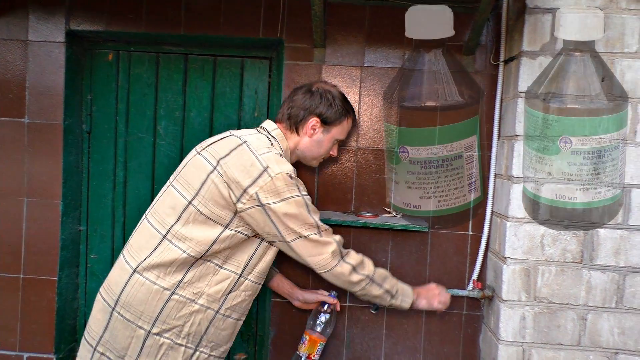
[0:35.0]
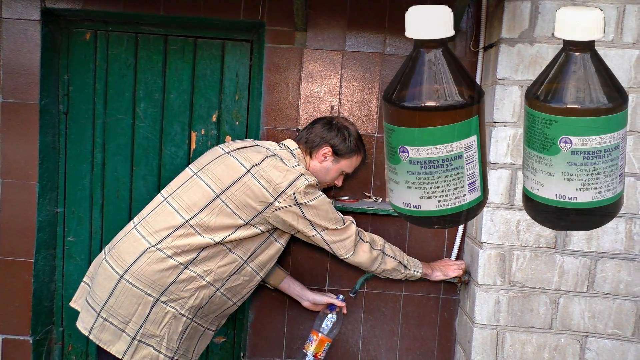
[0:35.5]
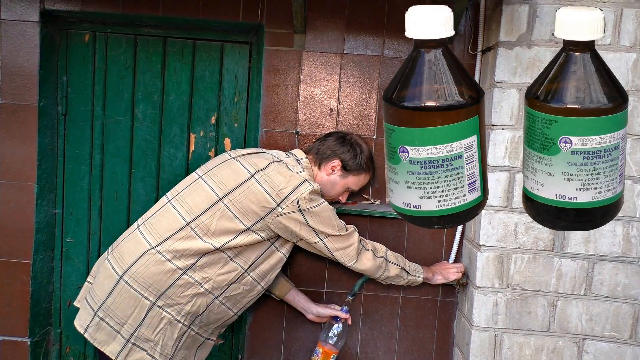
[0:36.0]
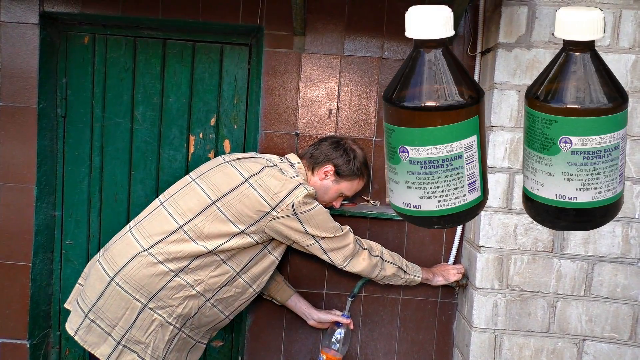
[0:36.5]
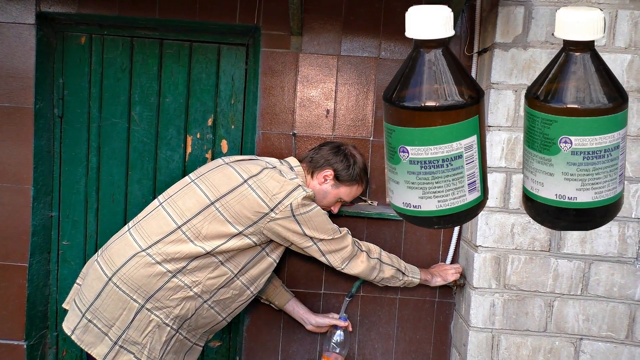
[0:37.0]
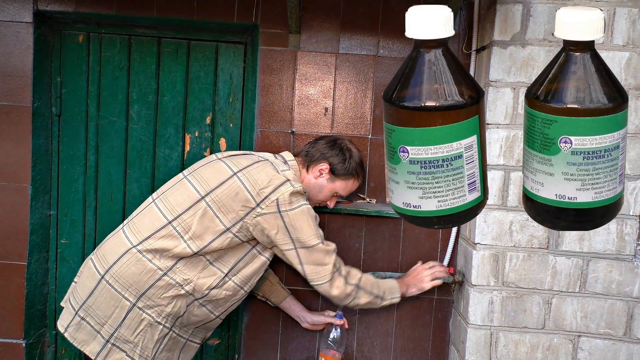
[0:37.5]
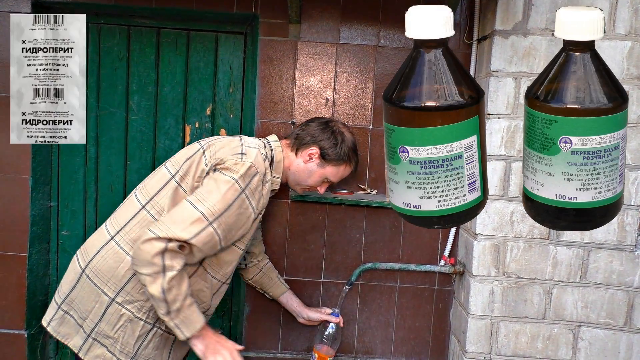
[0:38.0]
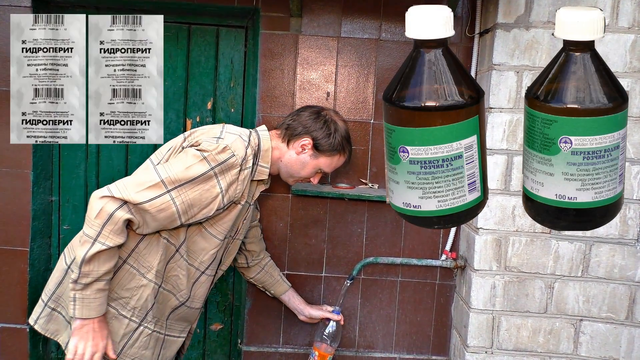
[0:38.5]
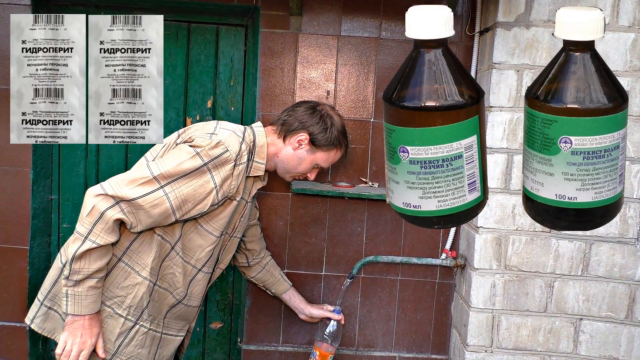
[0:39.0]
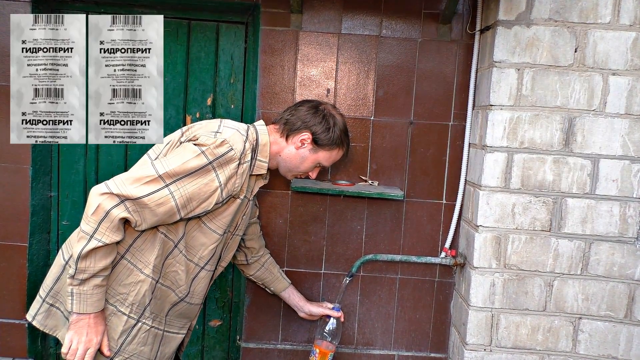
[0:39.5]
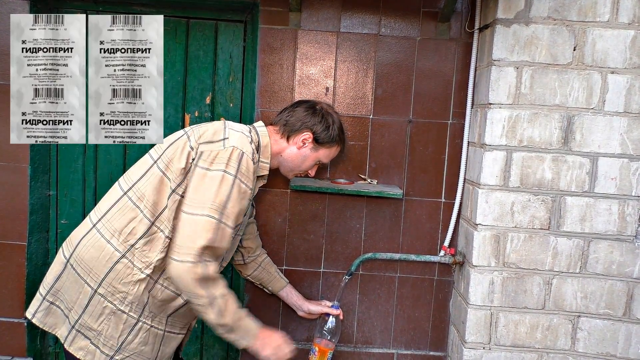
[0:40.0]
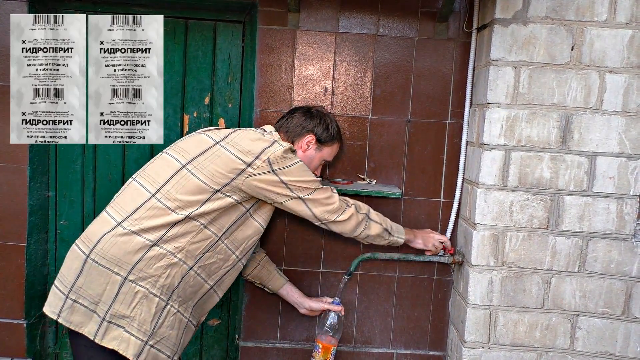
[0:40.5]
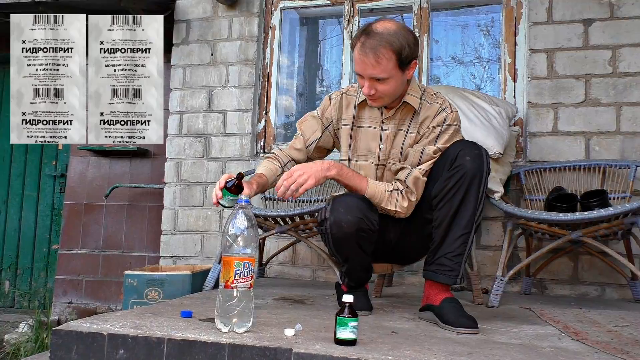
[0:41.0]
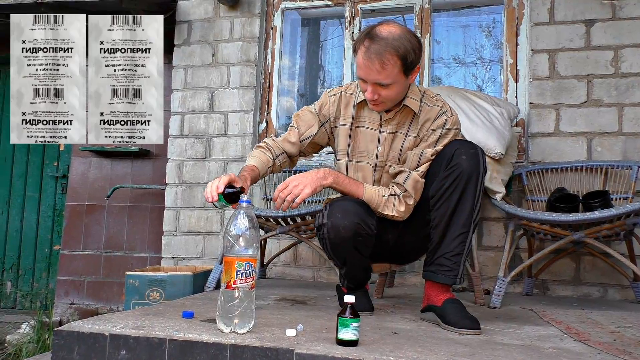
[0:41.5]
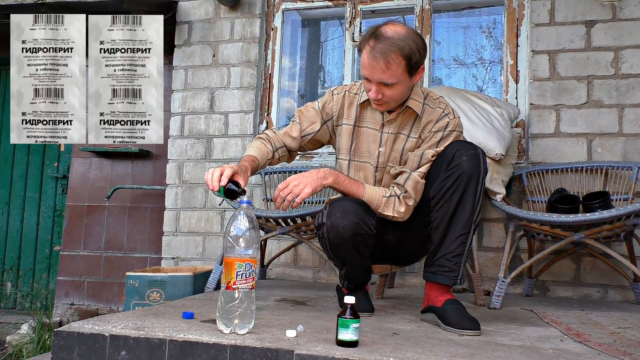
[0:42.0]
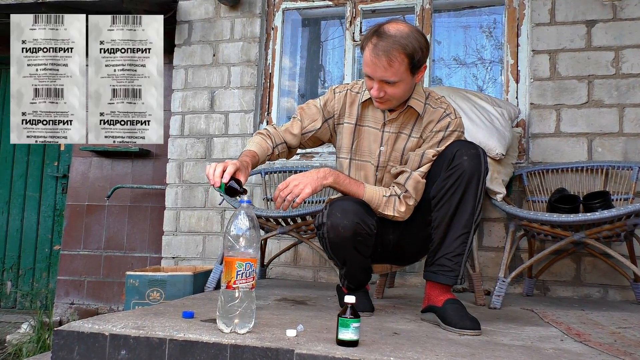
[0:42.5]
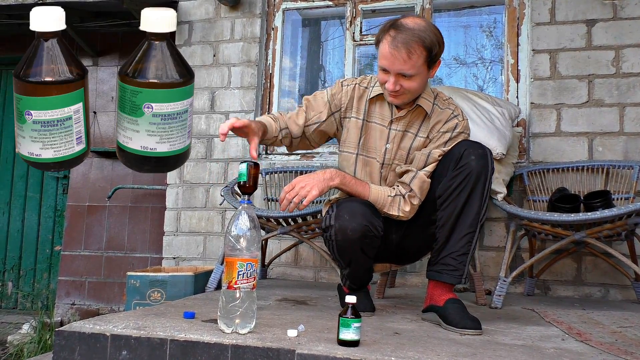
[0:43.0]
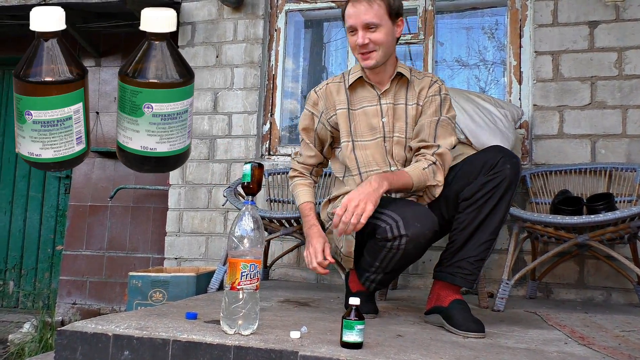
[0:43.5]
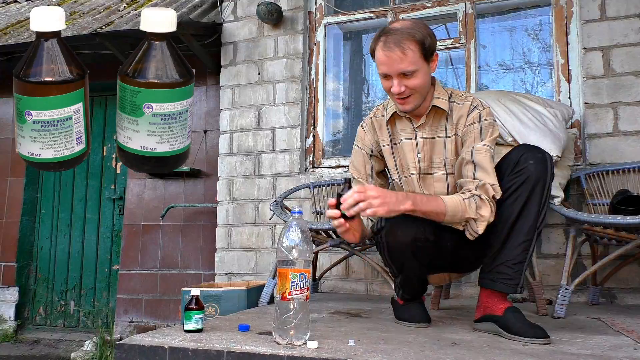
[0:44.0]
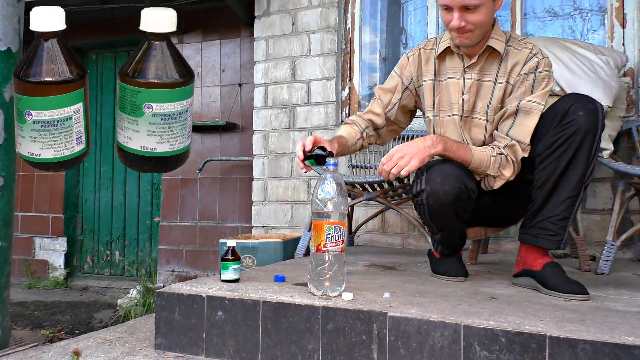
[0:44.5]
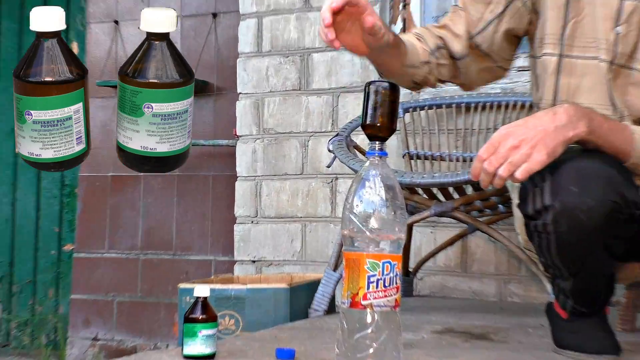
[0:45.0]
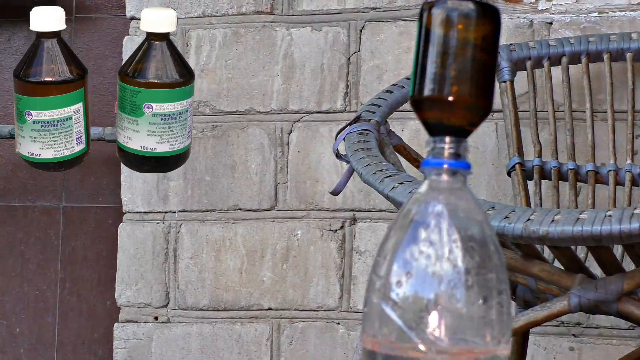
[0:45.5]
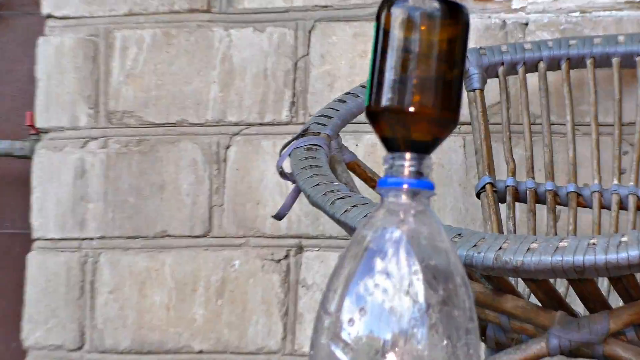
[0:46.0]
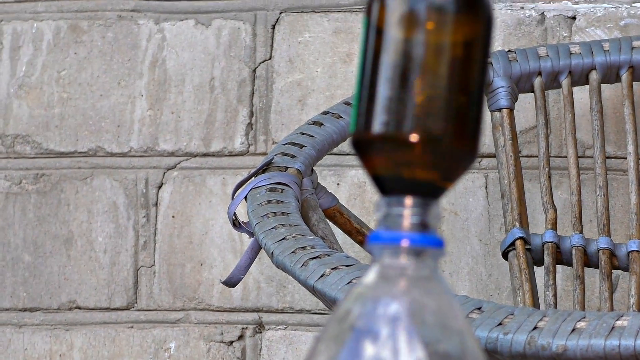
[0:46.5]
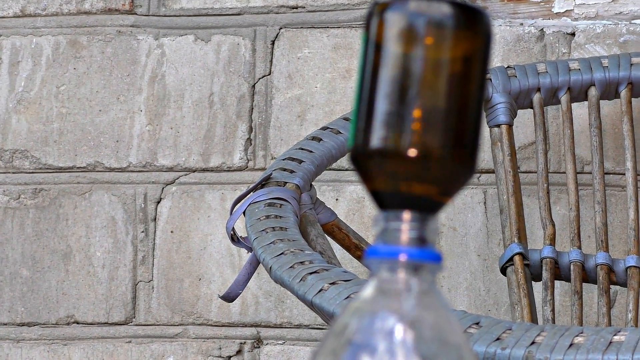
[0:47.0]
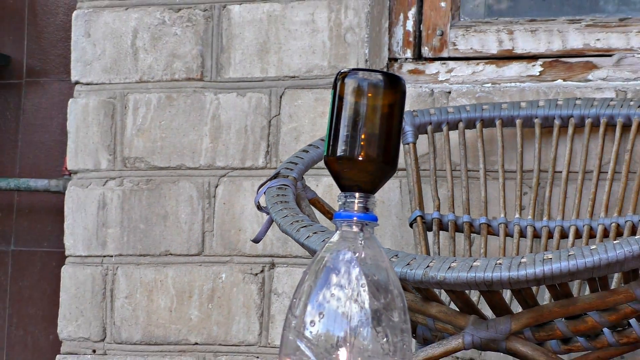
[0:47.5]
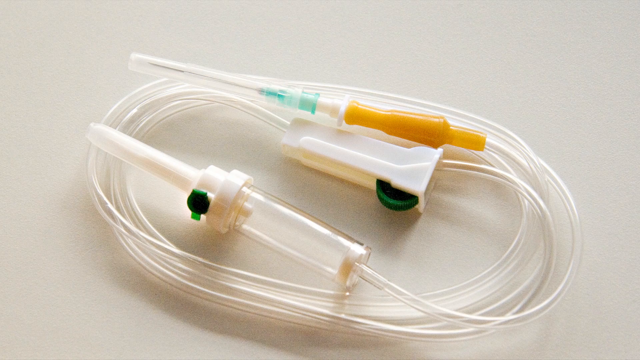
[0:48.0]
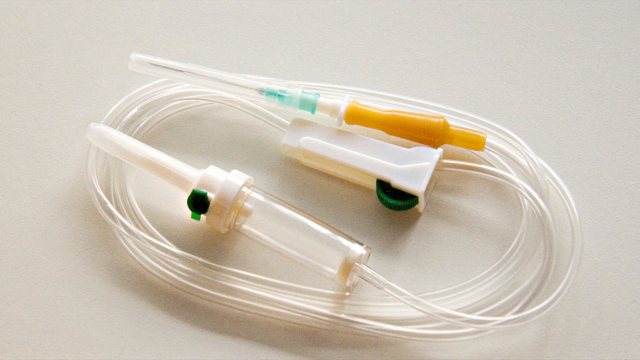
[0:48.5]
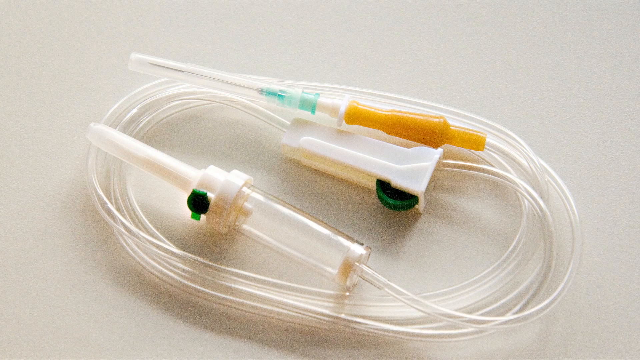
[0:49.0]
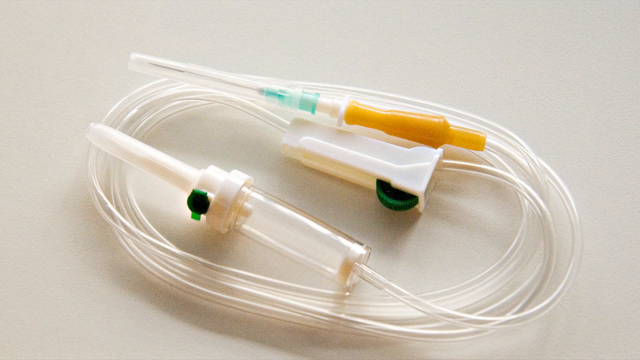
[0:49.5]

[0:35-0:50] The man speaks while working on a car. He says "we will pour some engine flush liquid in the running engine" and that it will thoroughly rinse the valves. He says there are different ways to decarbonize the engine: it can be poured into the fuel tank, the engine oil container, or the running engine through a tube, and he shows different ways of doing this. He says there are different nozzles from different manufacturers for different methods. The background shows a large number of engine products, probably 30 or 40 different plastic containers of different things. Text reads "we are going to use materials at hand because they are the cheapest and the most available ones." He pours water from a tap into a plastic container, and he says to mix hydrogen peroxide tablets with 5 liters of water.